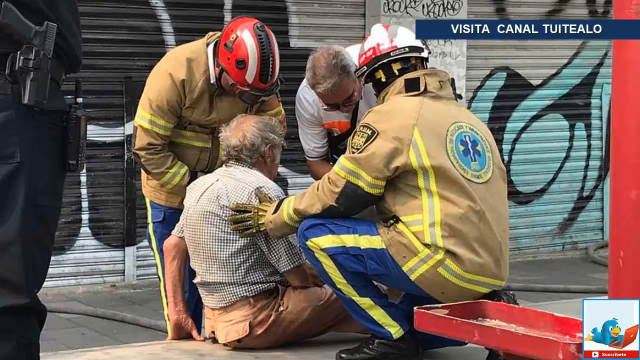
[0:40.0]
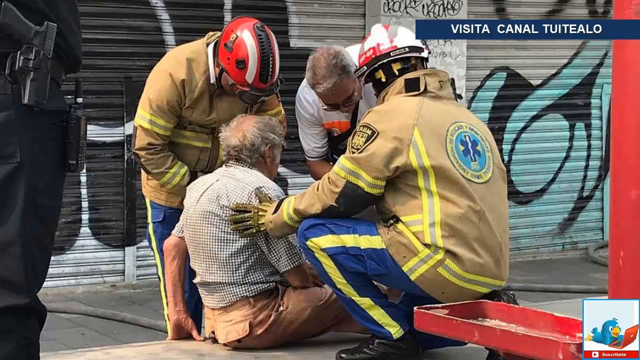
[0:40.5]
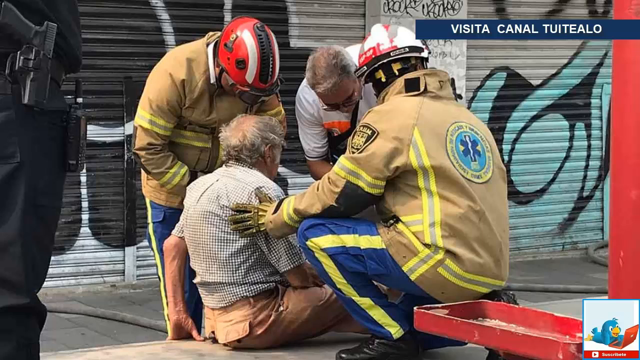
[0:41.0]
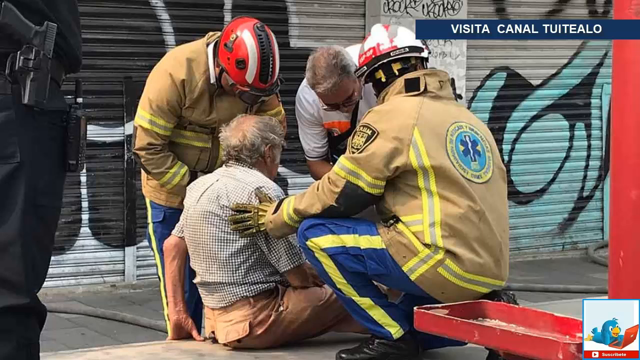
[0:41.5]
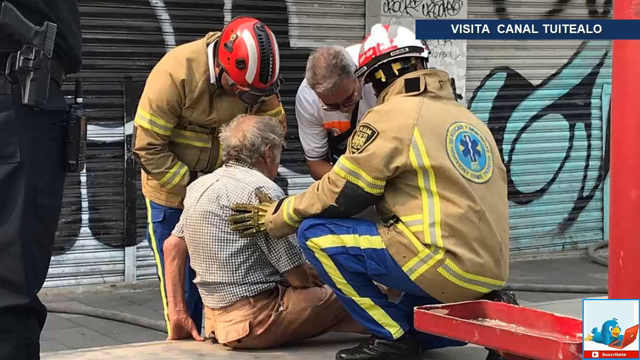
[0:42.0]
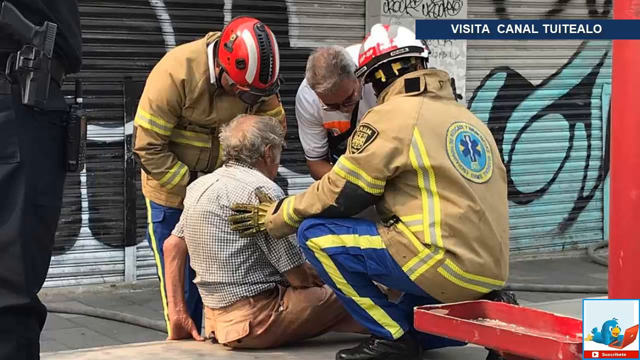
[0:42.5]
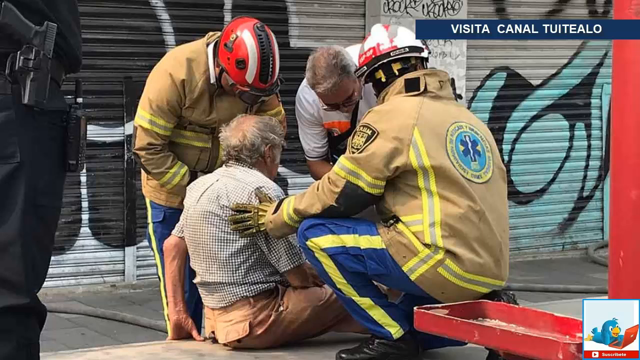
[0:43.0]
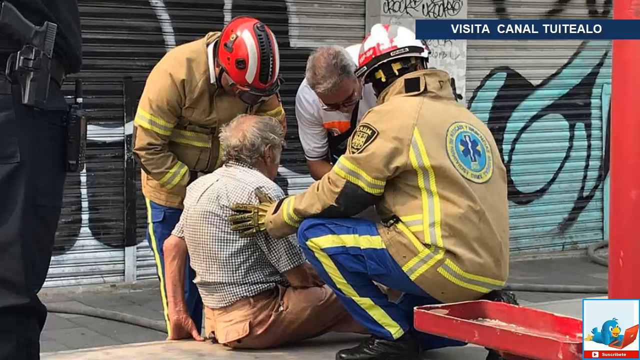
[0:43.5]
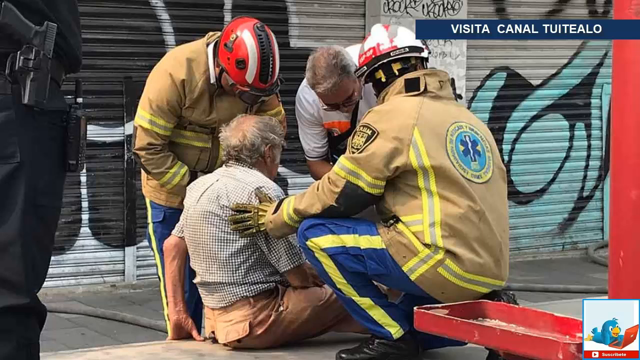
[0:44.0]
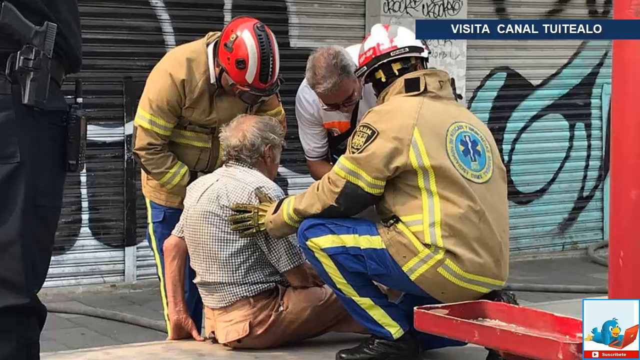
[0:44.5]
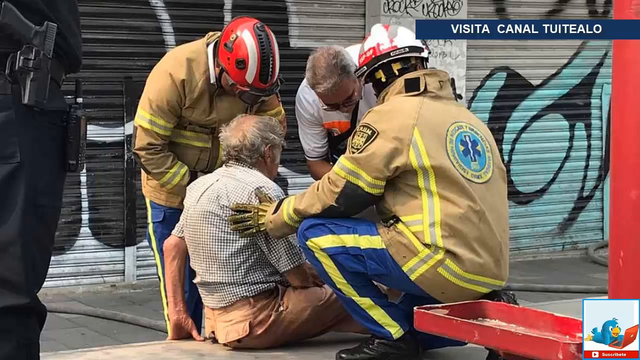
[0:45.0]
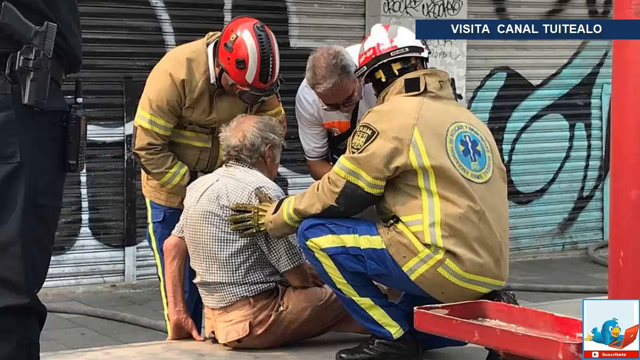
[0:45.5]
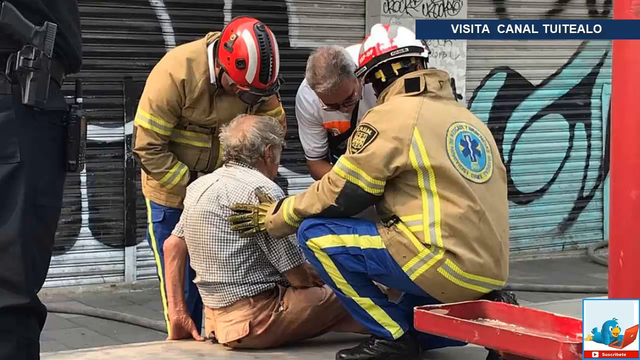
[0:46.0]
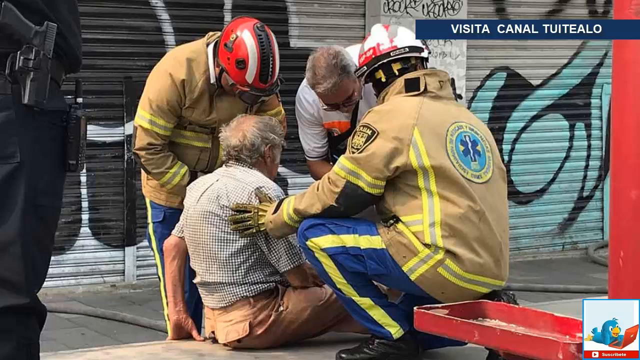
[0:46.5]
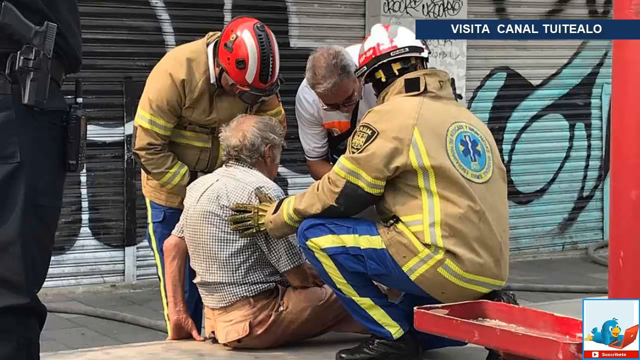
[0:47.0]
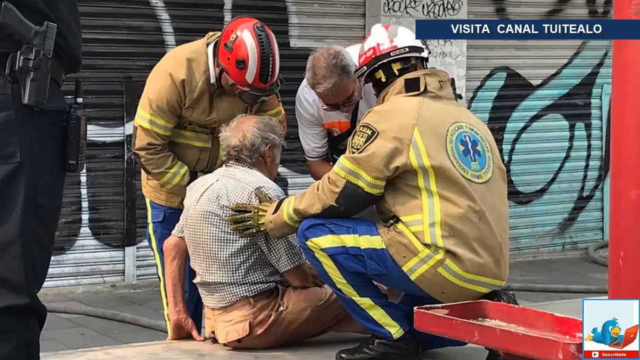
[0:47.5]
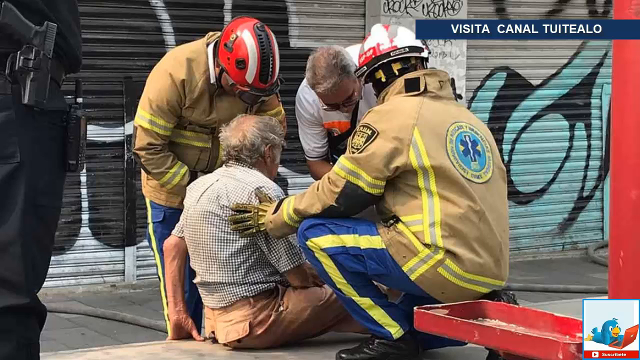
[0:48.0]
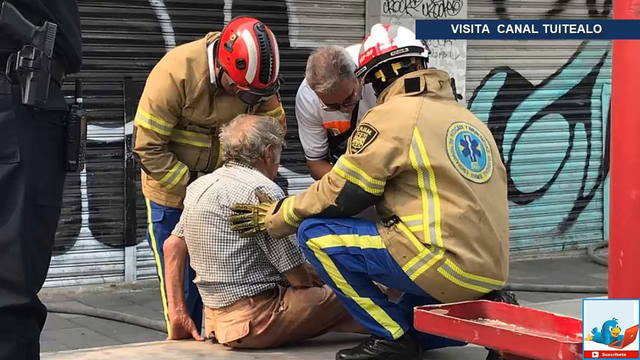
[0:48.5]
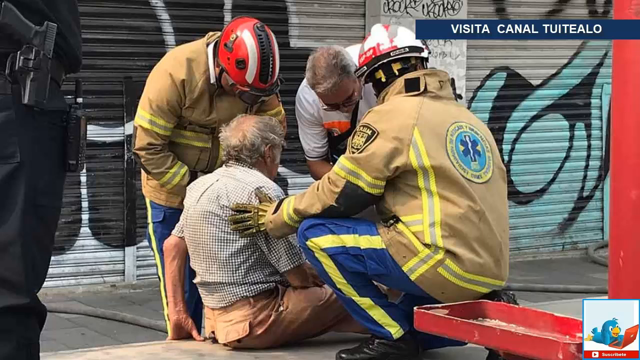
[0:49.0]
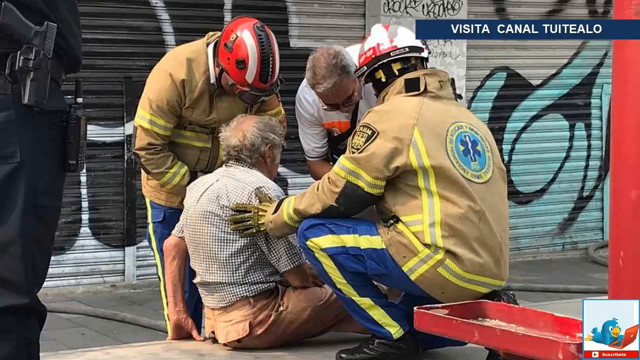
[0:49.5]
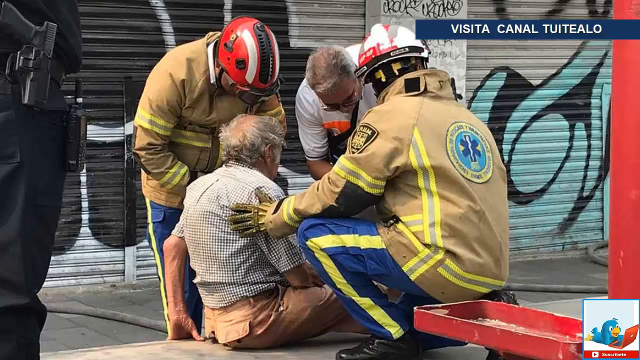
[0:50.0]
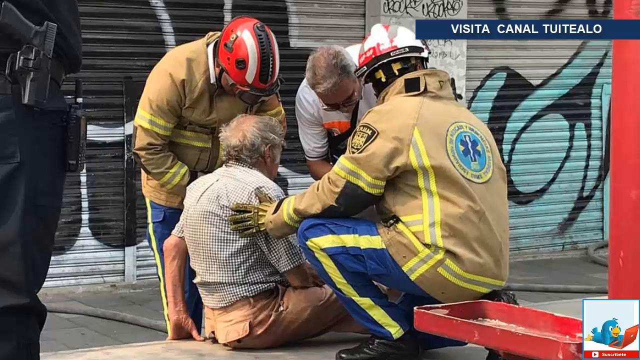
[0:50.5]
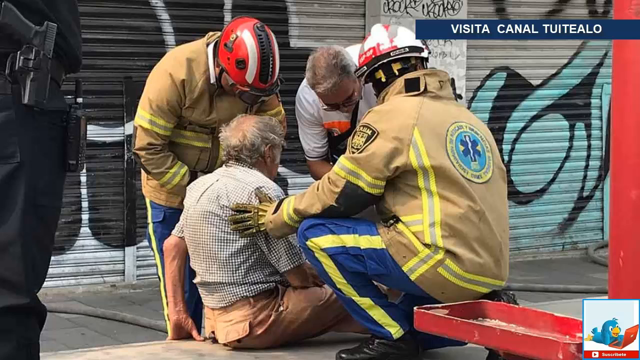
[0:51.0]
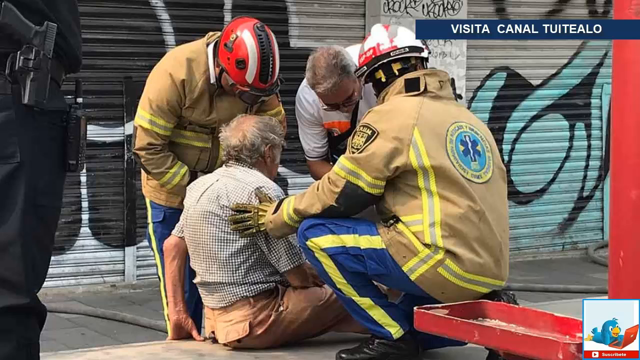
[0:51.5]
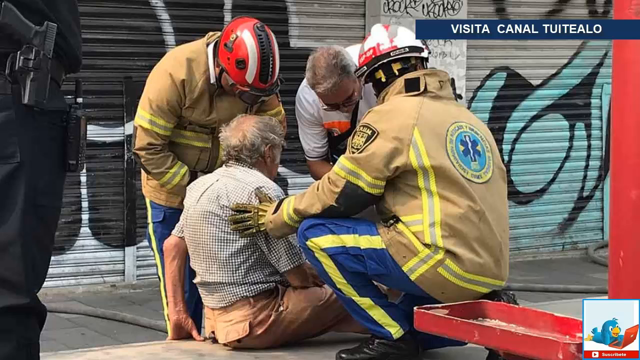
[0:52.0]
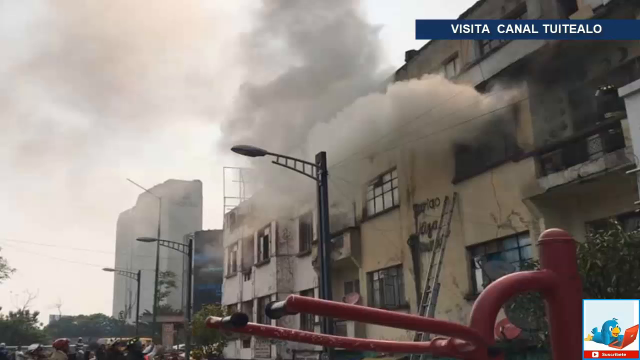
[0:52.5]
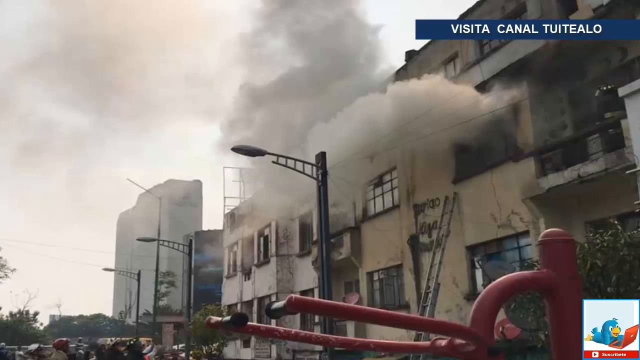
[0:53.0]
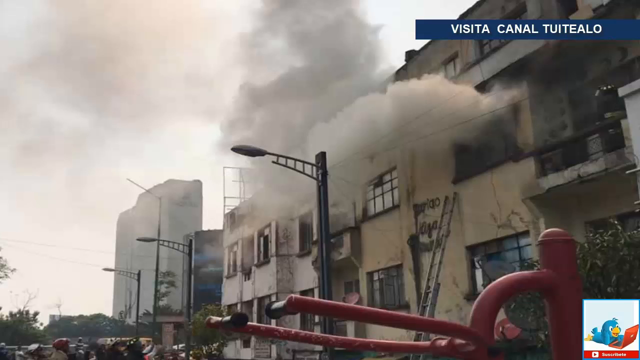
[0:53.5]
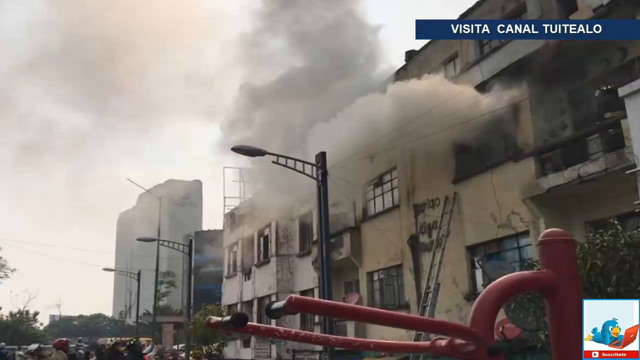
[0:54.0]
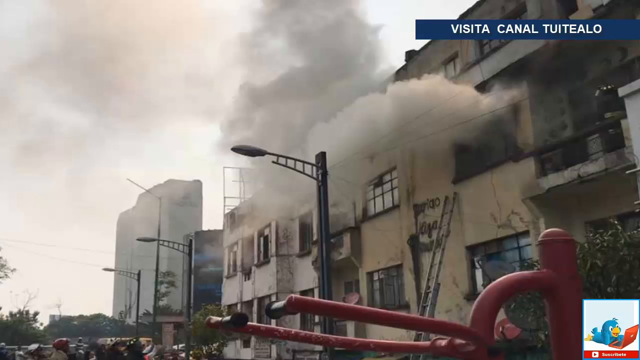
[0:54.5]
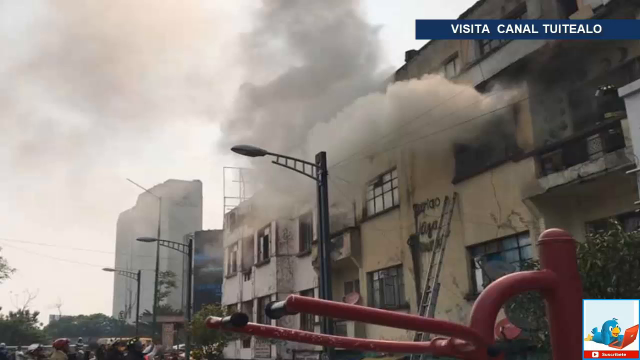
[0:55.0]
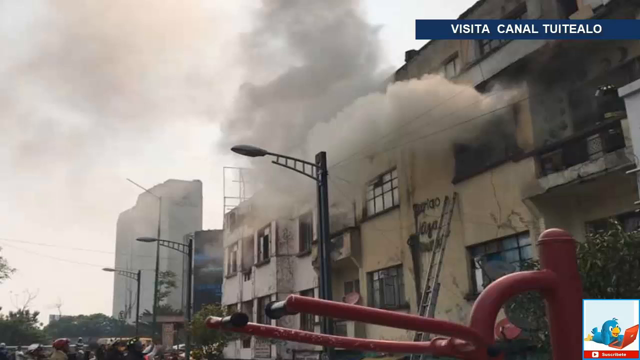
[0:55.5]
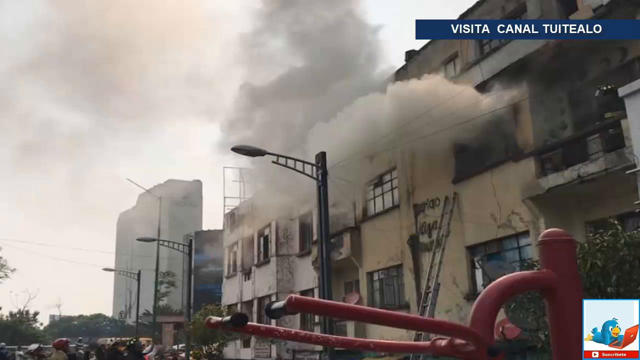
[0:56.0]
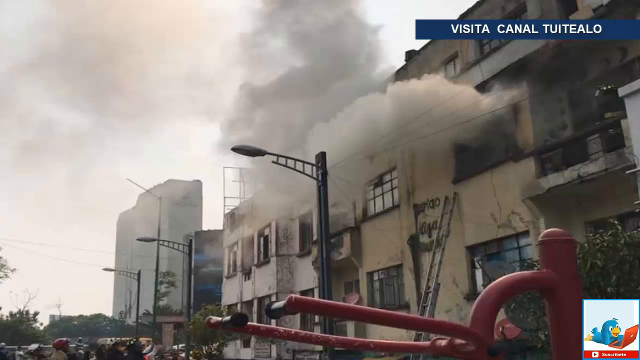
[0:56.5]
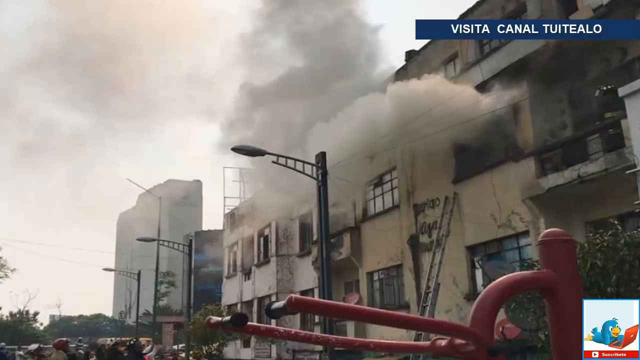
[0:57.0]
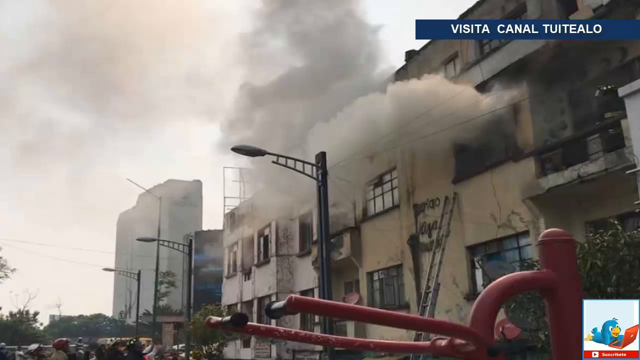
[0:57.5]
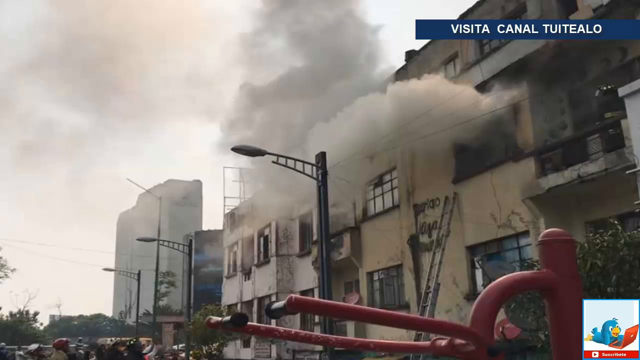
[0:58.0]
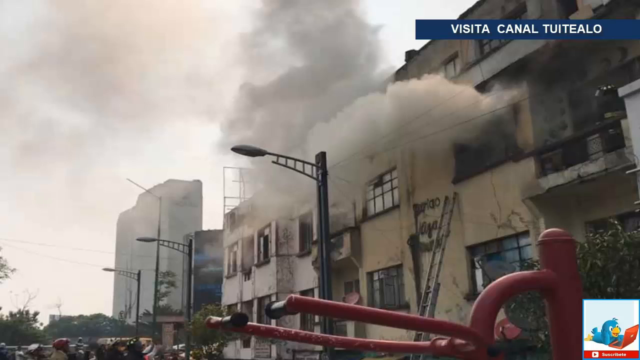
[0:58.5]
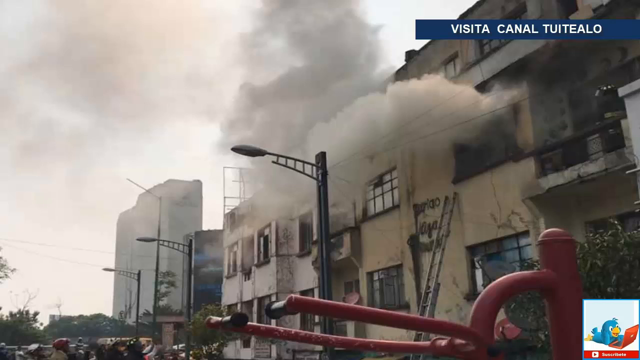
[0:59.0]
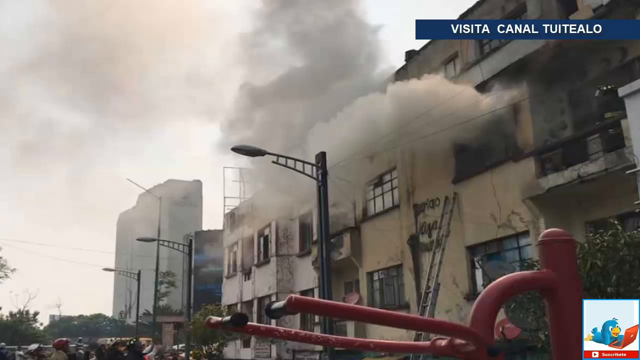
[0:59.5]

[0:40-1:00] A man who appears to have been rescued from the building sits on the ground, wearing tan pants and a black and white checked shirt. He is surrounded by what appear to be paramedics in blue pants with a yellow stripe and tan jackets with a yellow stripe; they have medical badges, and one has a medical badge on the back of his jacket. One paramedic's helmet is white with red writing, and the other's is red with white stripes and a black stripe down the top middle. They appear to have on goggles. A man in a white shirt and glasses leans in front of the rescued man and appears to have something like a black bag across his chest. A police officer stands in all black, with his gun and walkie-talkie visible. Behind the rescued man and the paramedics are metal rolling shutters. The view then turns to the burning building, with lots of smoke coming from it in the foreground. The ladder on the building and three street lights are visible. There is something red, like a bike pole or playground equipment, and a very tall building is in the background.